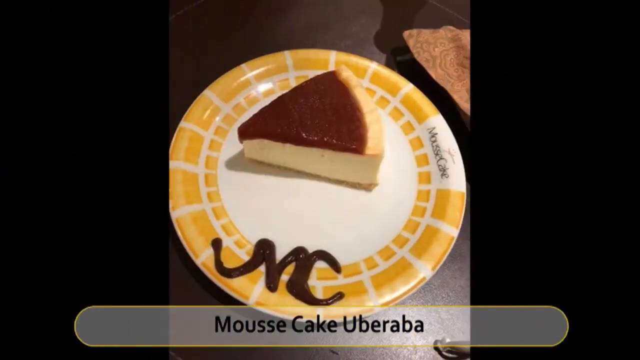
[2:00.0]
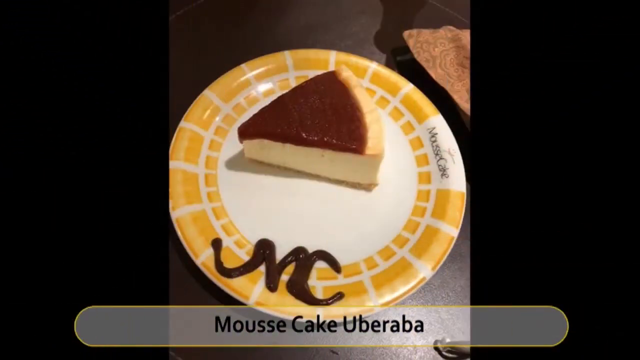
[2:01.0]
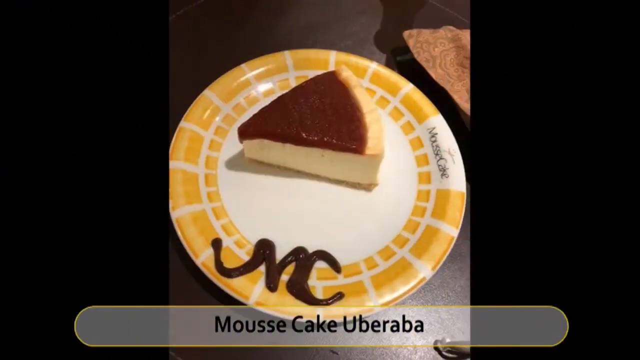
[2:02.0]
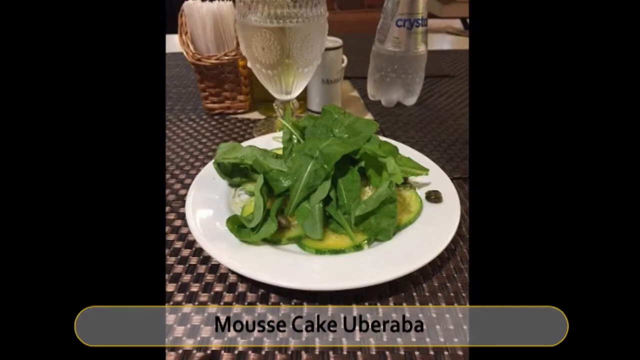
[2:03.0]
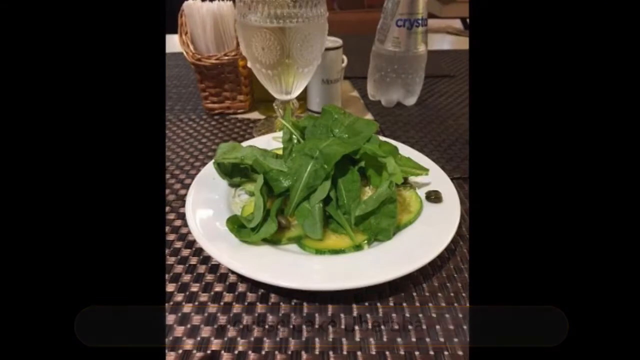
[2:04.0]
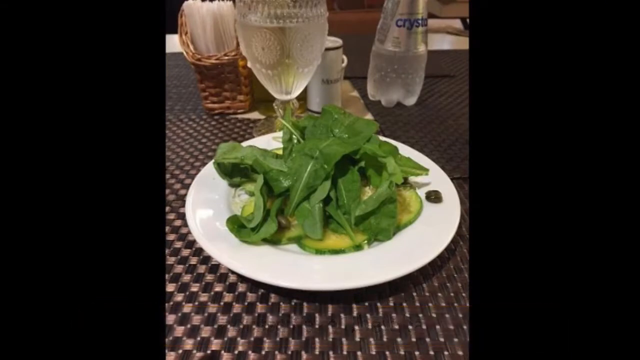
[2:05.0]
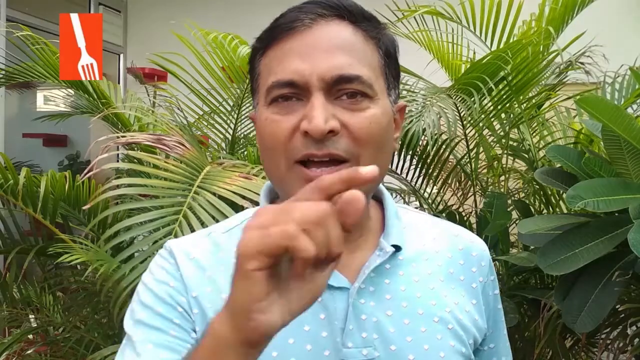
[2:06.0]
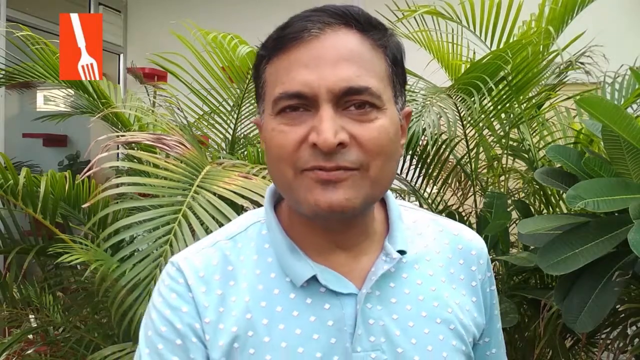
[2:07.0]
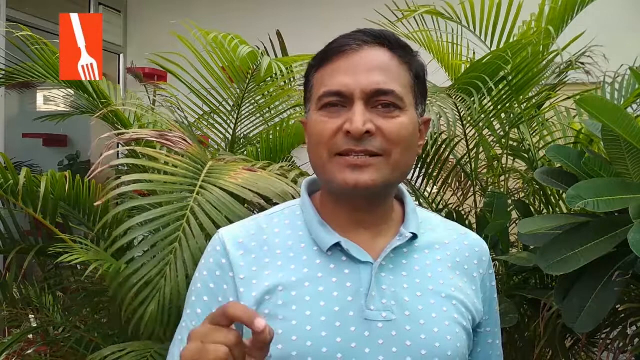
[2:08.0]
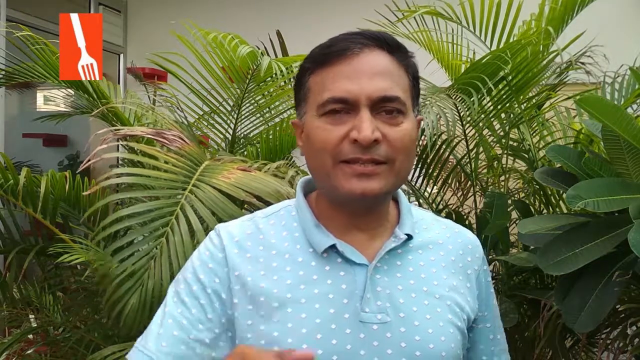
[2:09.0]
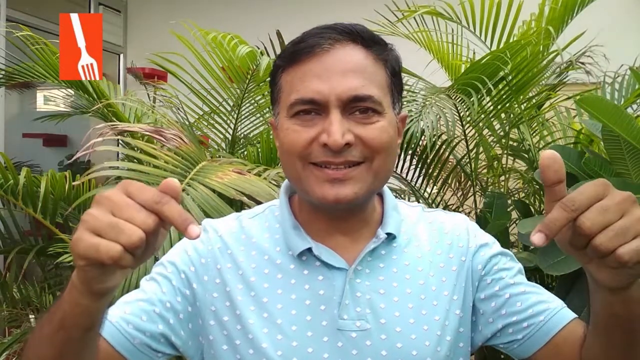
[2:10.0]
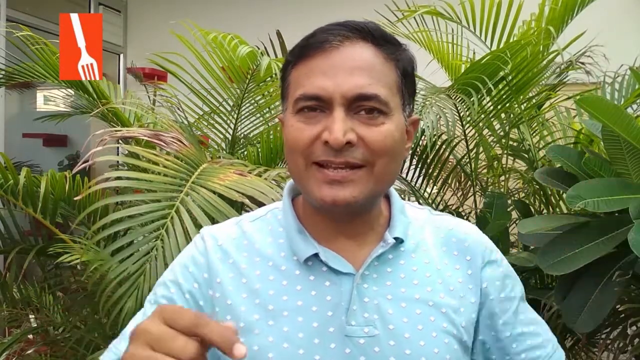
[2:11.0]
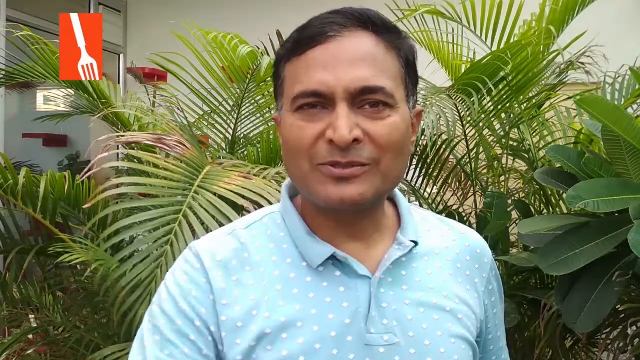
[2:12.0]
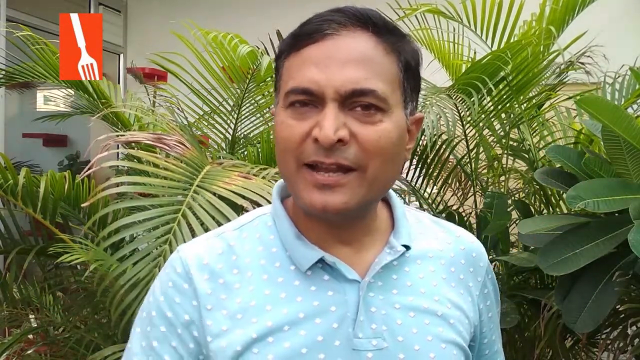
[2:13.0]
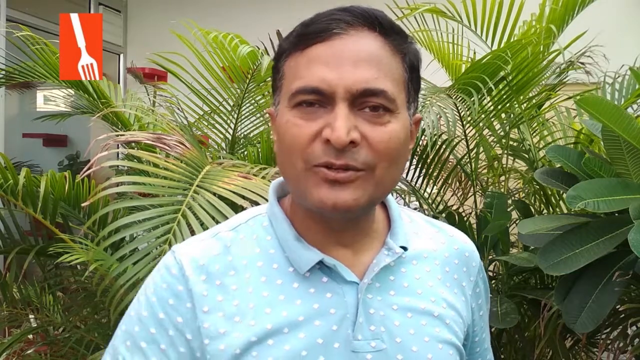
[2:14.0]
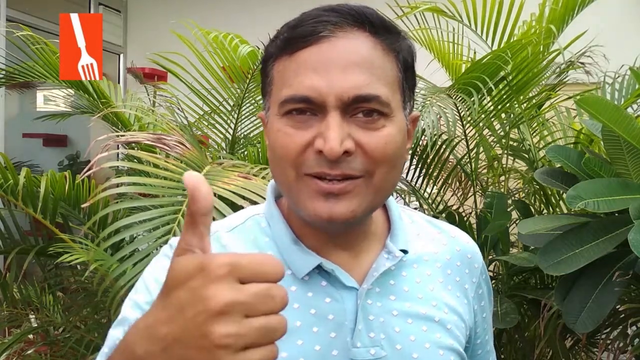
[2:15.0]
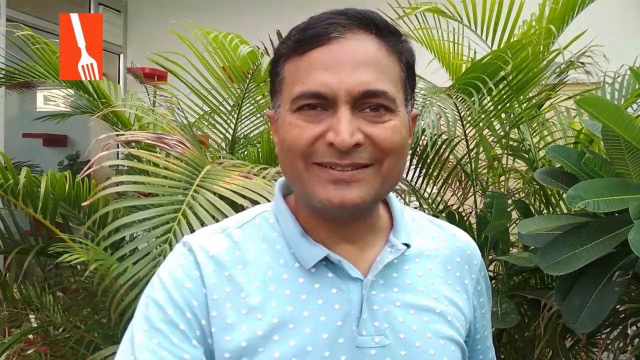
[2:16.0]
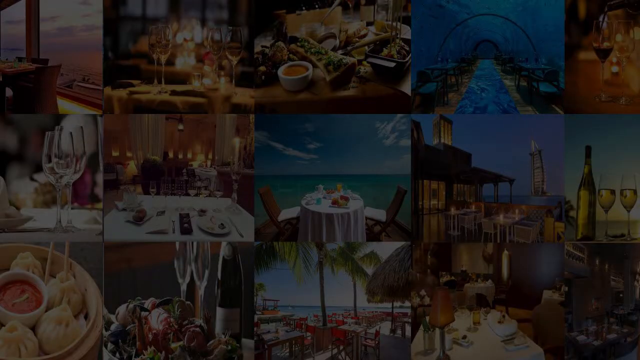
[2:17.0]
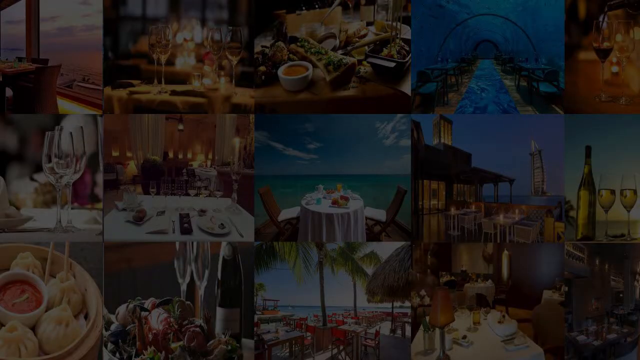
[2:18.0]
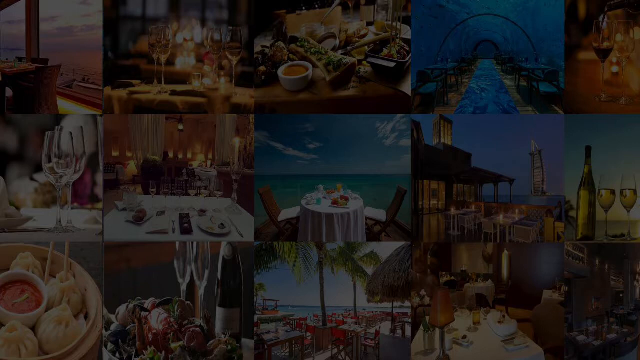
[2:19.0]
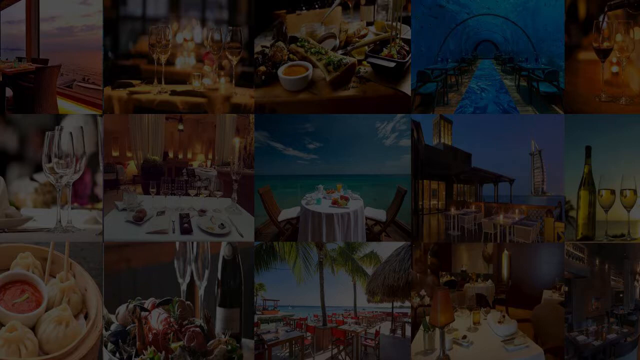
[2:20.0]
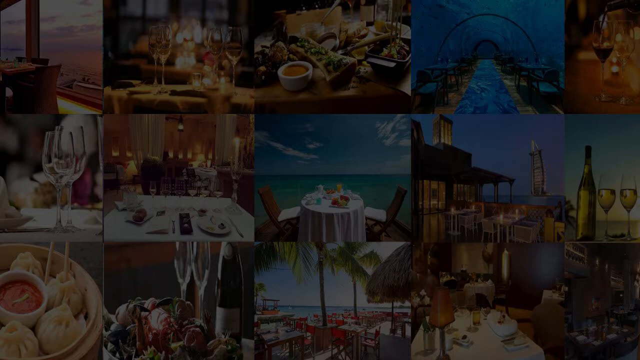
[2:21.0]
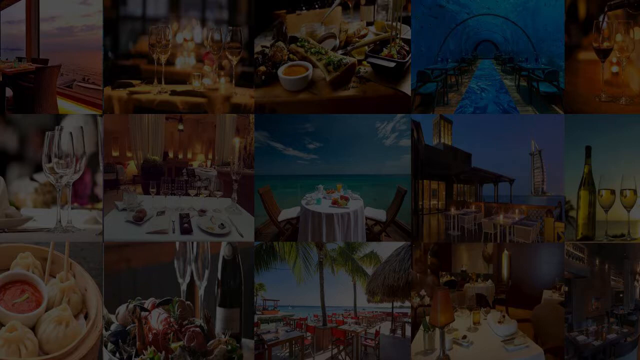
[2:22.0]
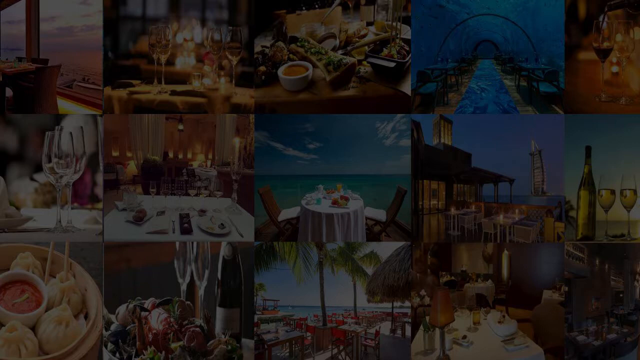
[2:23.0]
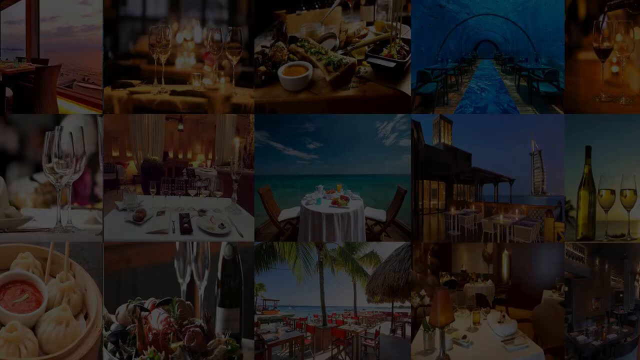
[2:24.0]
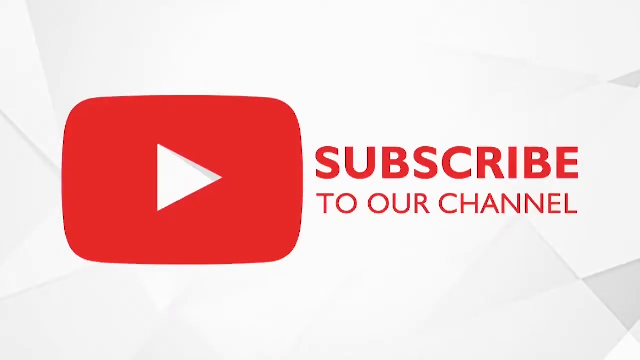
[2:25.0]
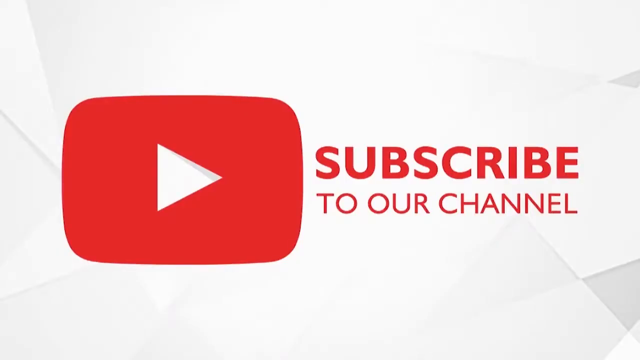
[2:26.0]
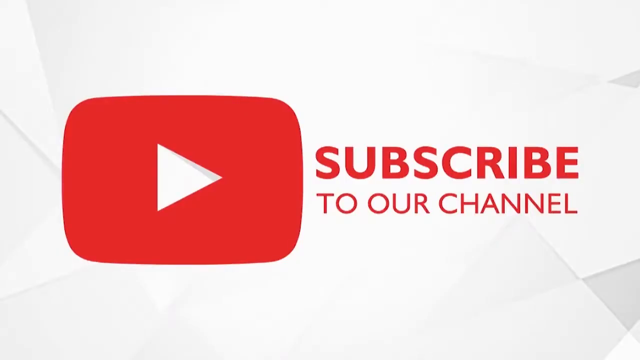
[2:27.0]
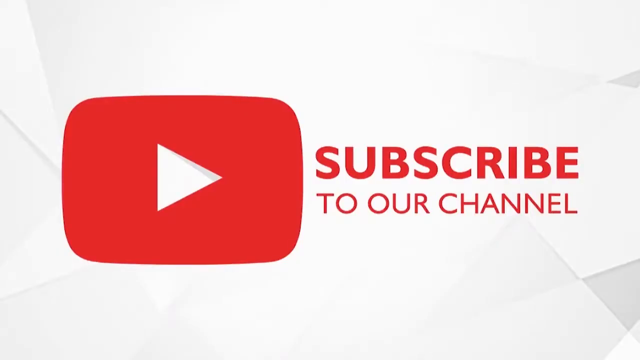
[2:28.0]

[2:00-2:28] Food on a plate is shown; it is brown at the top and white around the center and looks to have some crust. The name of the food appears in an overlay at the bottom center of the image. A transition pulls the image apart at the upper left, upper right, bottom left and bottom right, revealing the next image behind it, a leafy green plate of food. Then a man talks to the camera, gesturing with his right hand. He backs up slightly while speaking, then lifts his right hand so it is barely in view of the camera, with the tips of his index finger and thumb touching to make an okay sign.